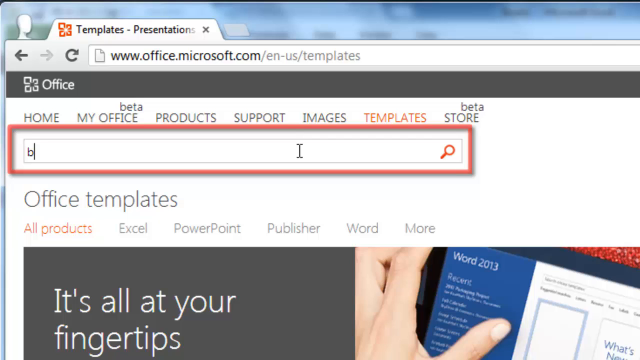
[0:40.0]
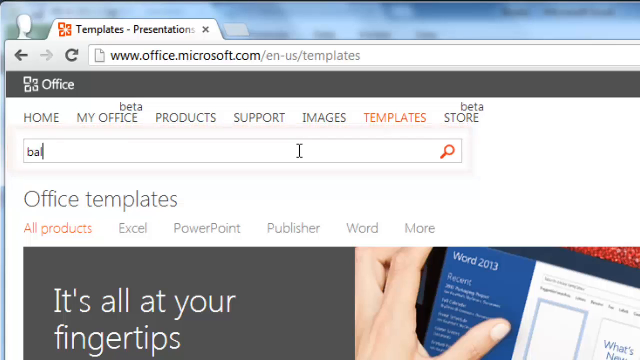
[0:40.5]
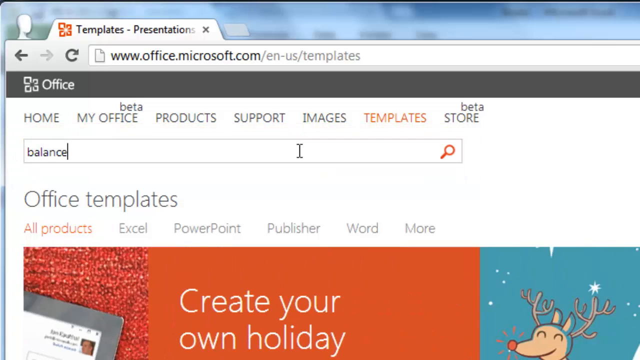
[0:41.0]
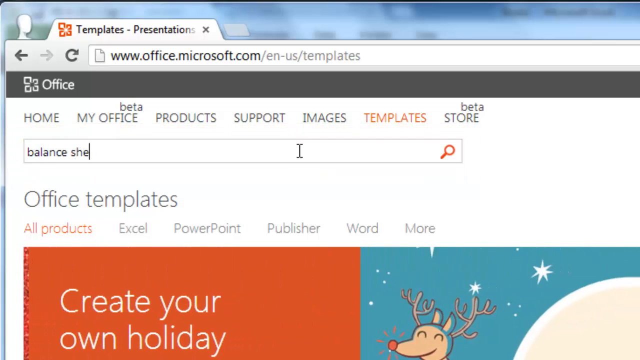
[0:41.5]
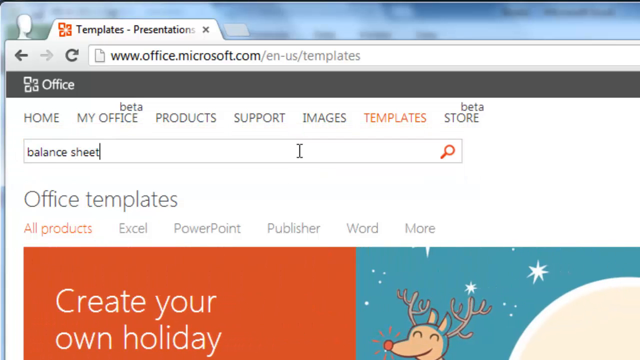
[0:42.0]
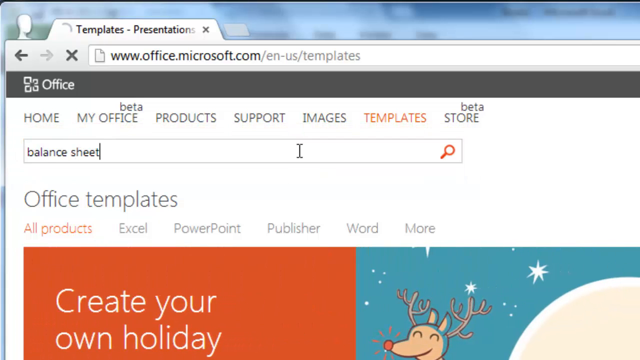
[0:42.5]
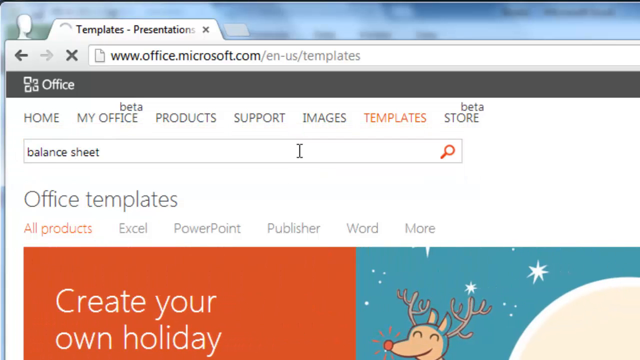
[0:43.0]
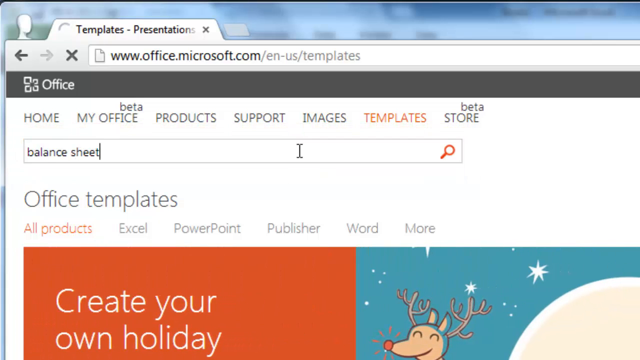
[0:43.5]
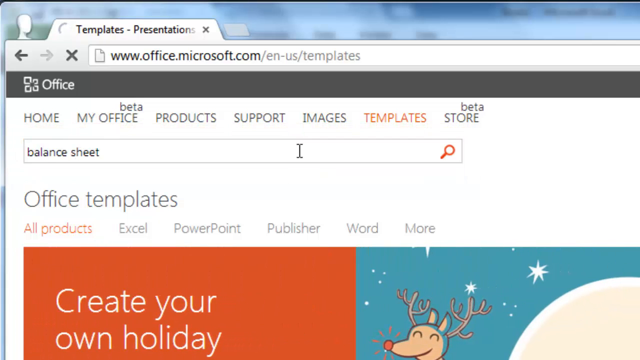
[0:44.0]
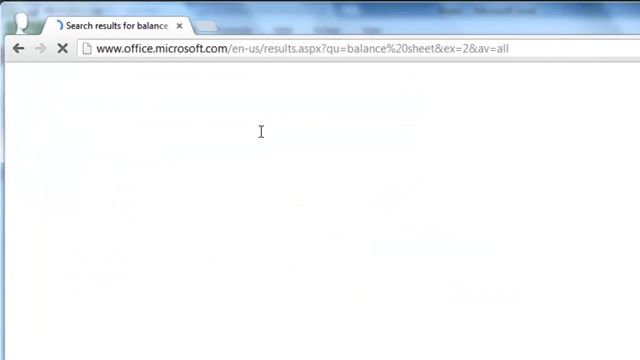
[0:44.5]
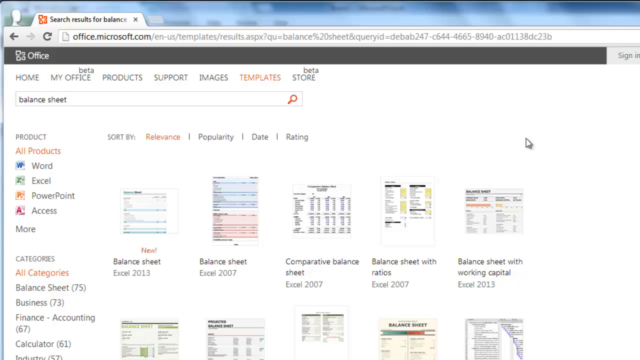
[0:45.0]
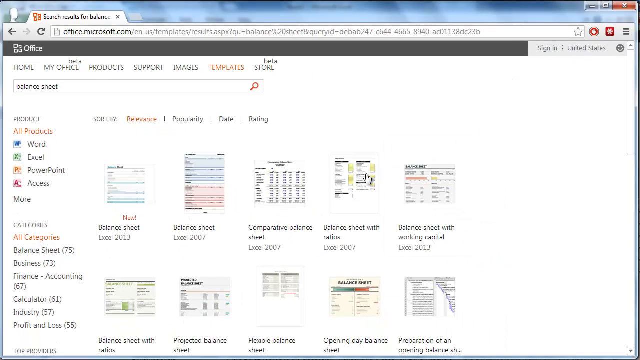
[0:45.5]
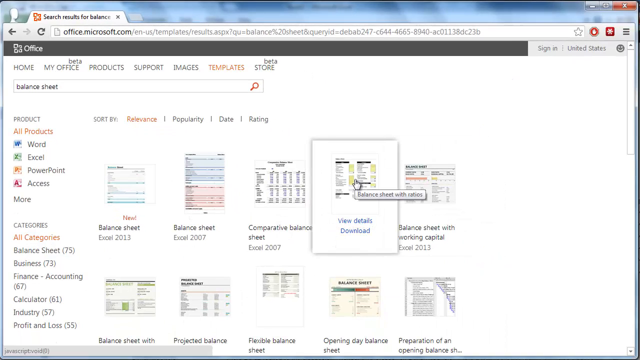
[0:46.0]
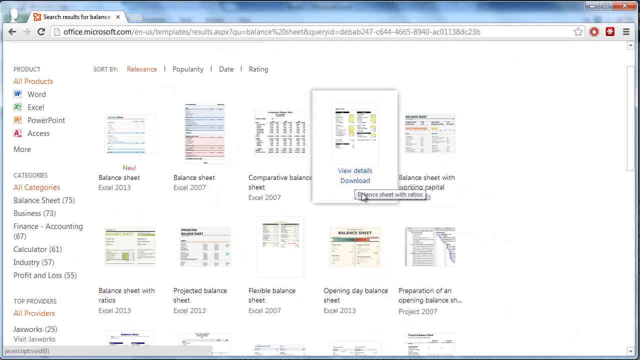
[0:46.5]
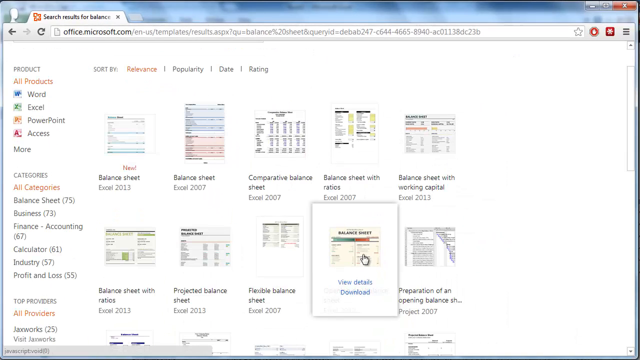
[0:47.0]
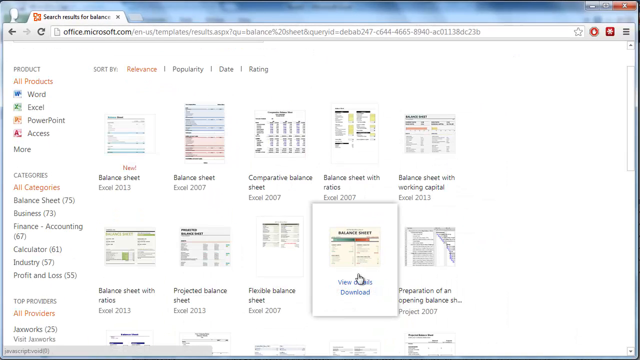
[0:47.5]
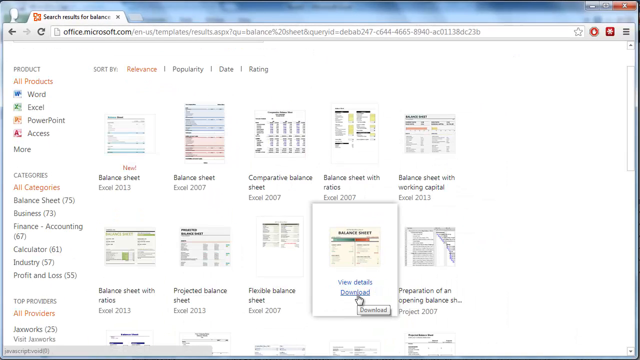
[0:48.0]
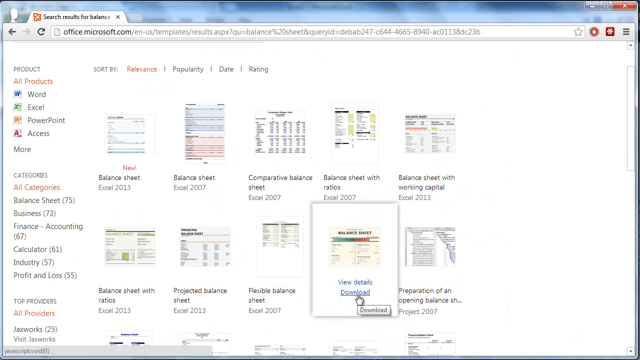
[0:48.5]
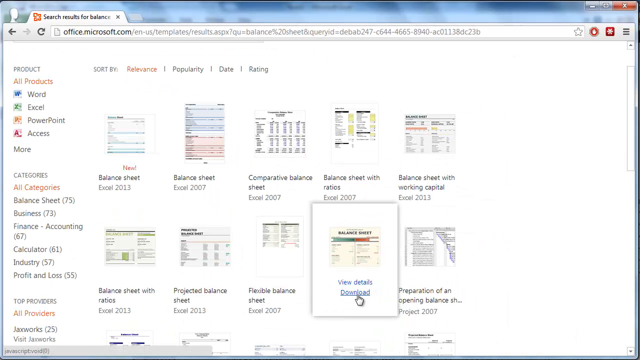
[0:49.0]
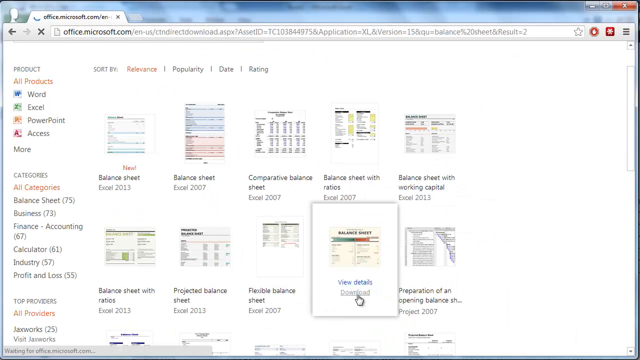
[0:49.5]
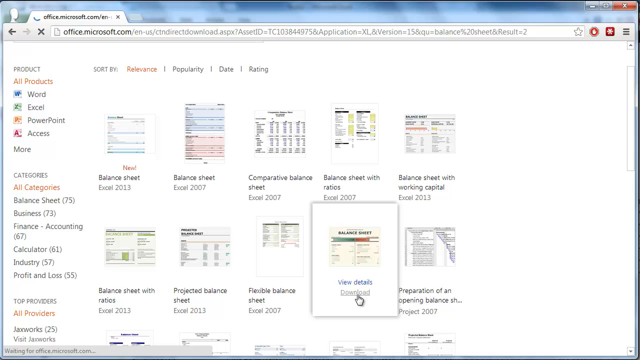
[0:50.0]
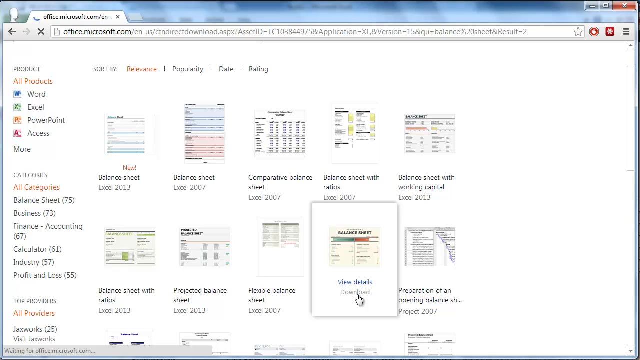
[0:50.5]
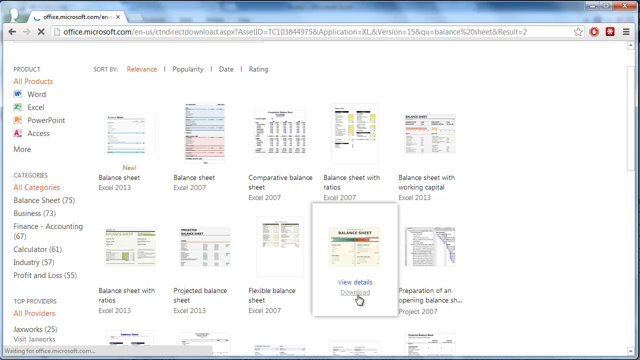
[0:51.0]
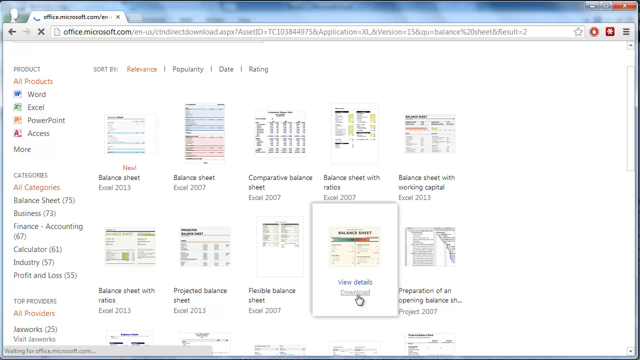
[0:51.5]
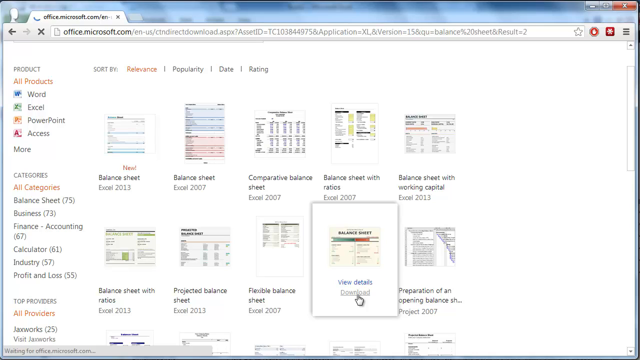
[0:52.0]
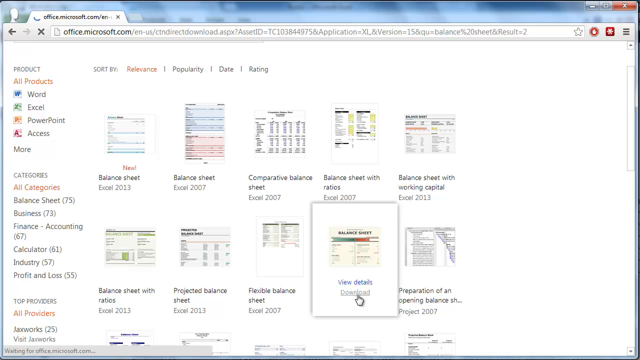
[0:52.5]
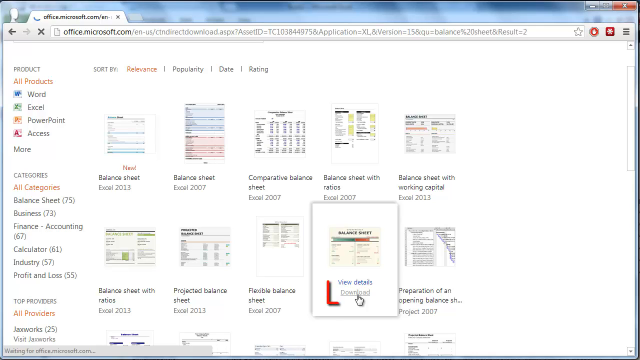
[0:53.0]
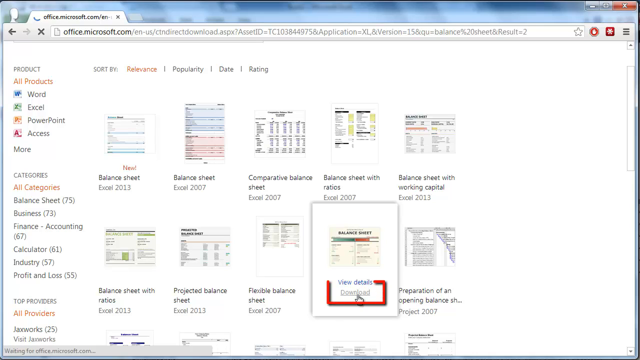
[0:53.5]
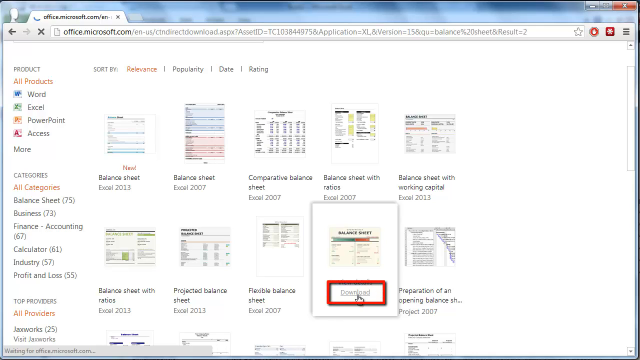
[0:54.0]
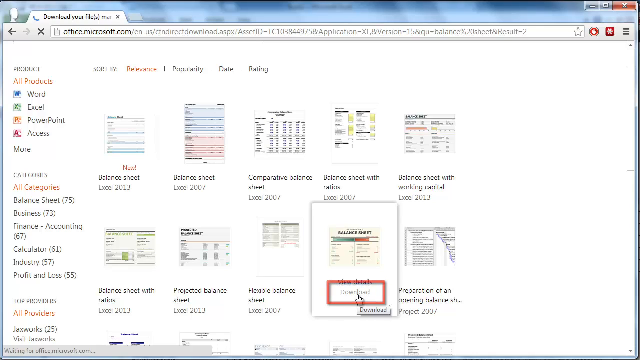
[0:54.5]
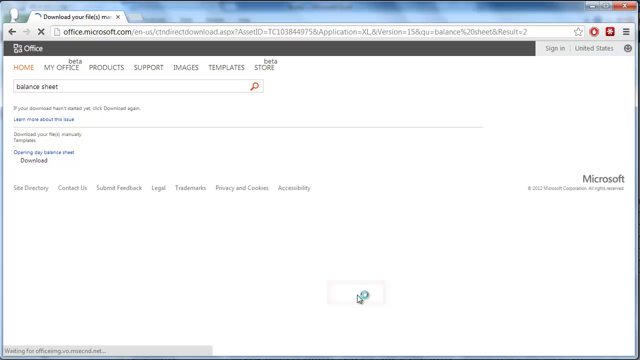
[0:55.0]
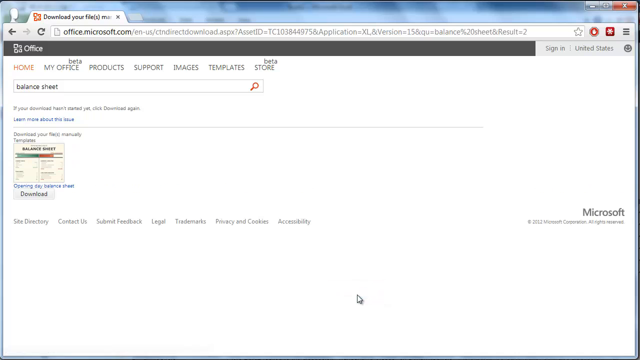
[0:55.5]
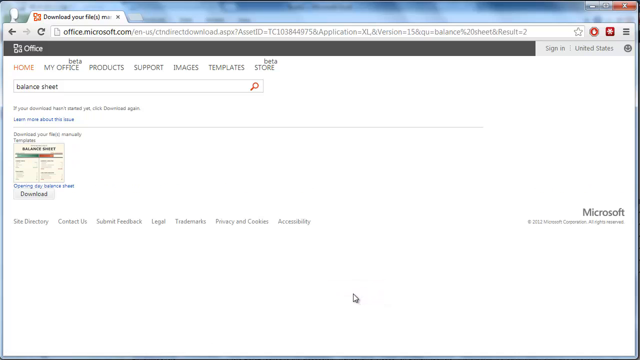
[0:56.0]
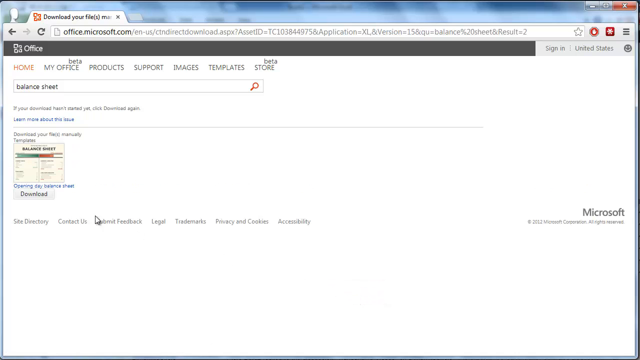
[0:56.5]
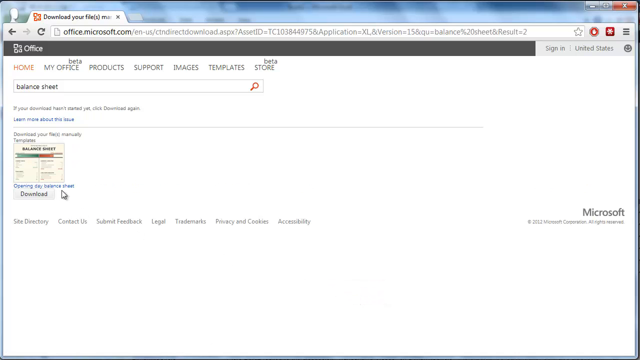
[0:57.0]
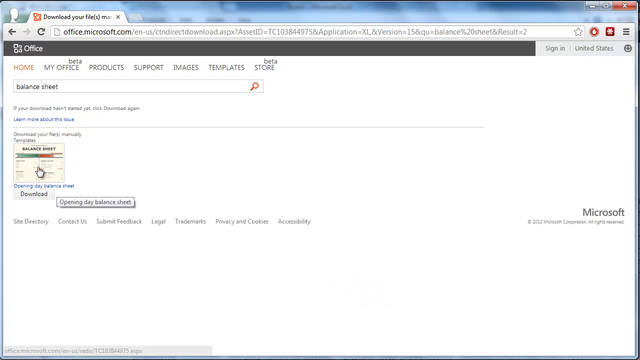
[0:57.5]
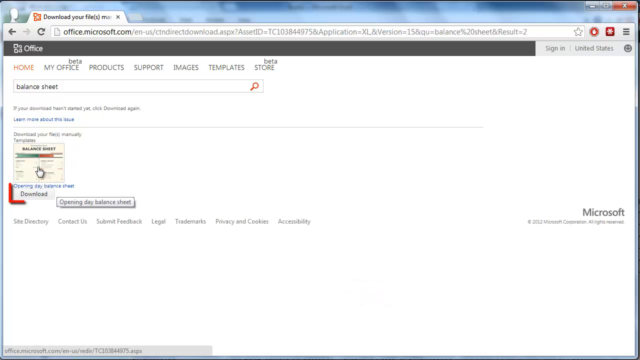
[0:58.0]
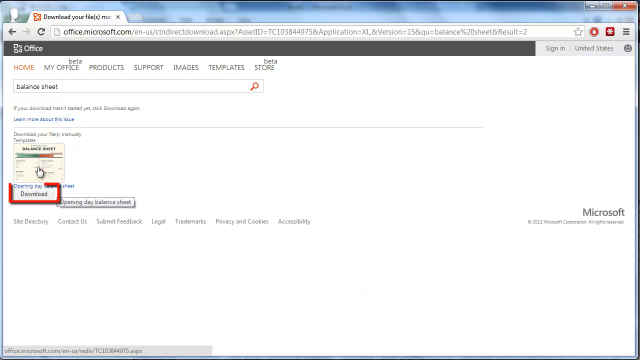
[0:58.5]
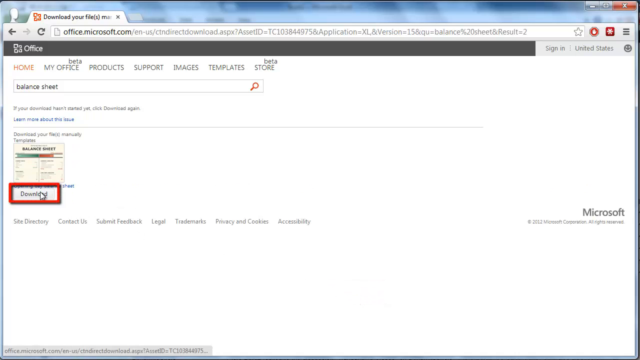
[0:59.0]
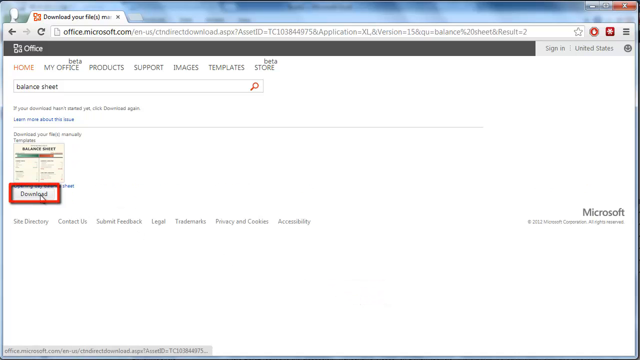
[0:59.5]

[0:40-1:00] In the "search all templates" field, the person types "balance sheet". The website loads and a list of templates appears, including "balance sheet from Excel 2013", "balance sheet from Excel 2007", "comparative balance sheet from Excel 2007", "balance sheet with ratios, Excel 2007", "balance sheet with working capital from Excel 2013", "balance sheet with ratios, Excel 2013", "projected balance sheet, Excel 2013" and "flexible balance sheet, Excel 2007". The person selects the opening balance sheet and downloads it, clicking download a first and a second time.